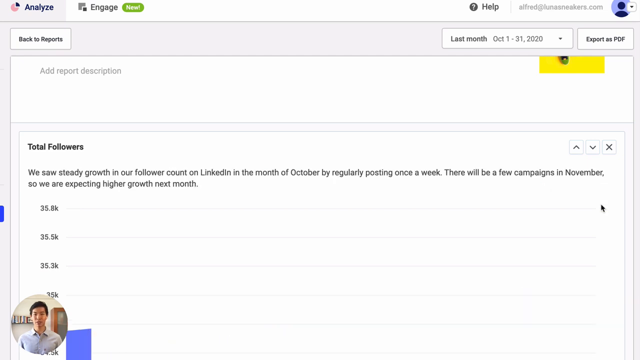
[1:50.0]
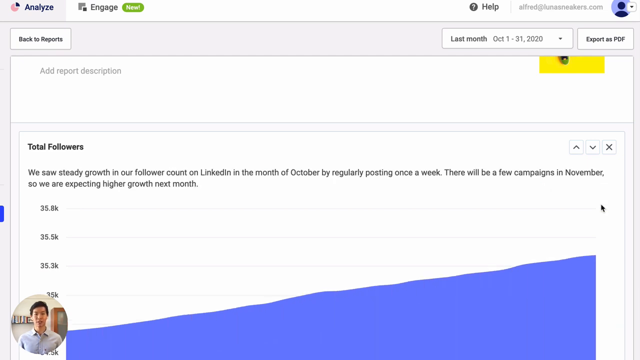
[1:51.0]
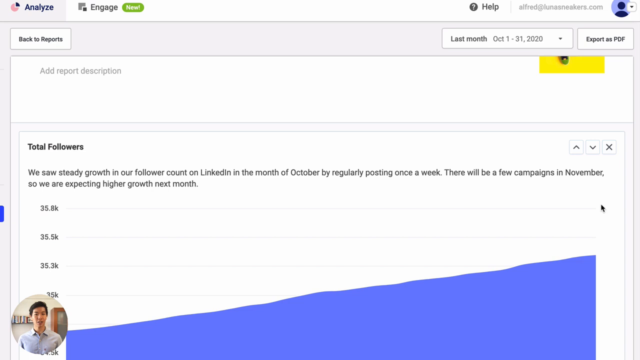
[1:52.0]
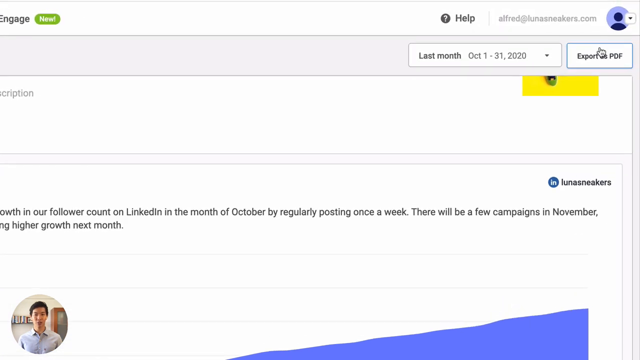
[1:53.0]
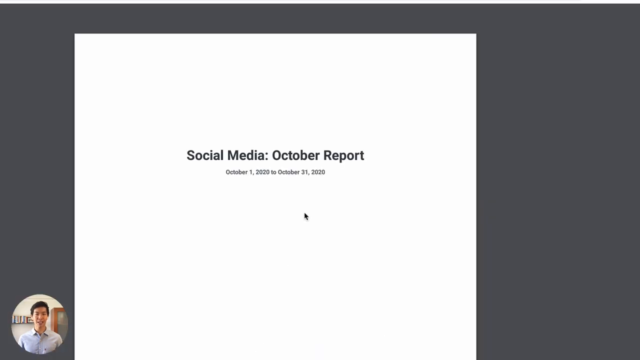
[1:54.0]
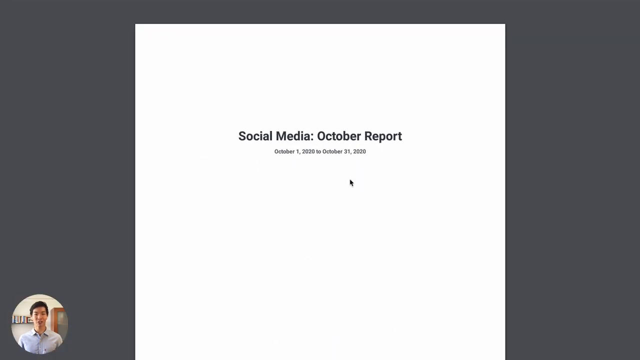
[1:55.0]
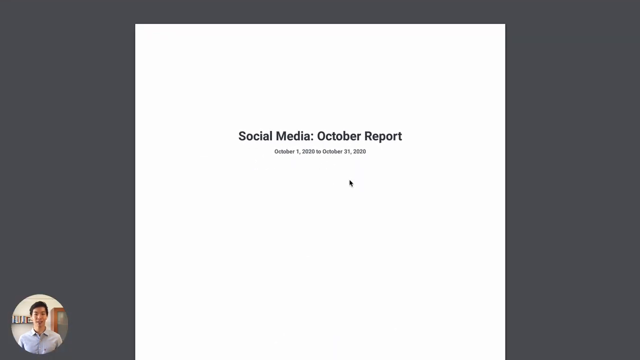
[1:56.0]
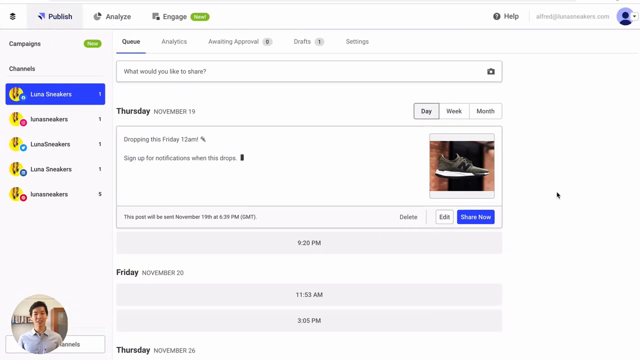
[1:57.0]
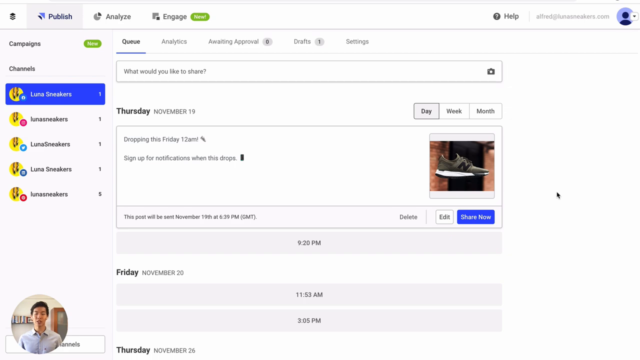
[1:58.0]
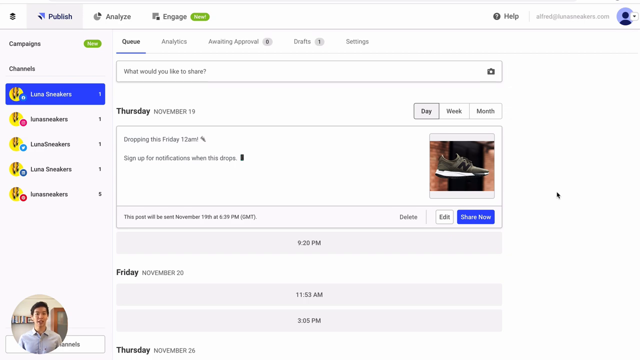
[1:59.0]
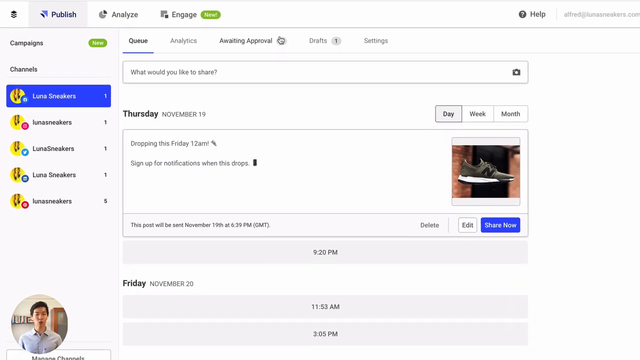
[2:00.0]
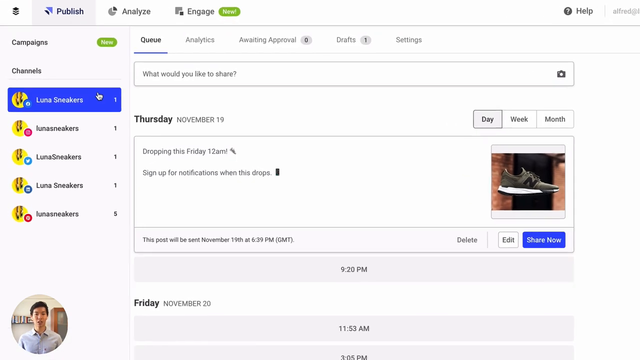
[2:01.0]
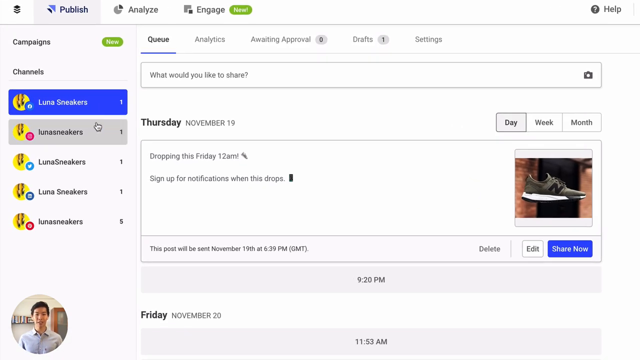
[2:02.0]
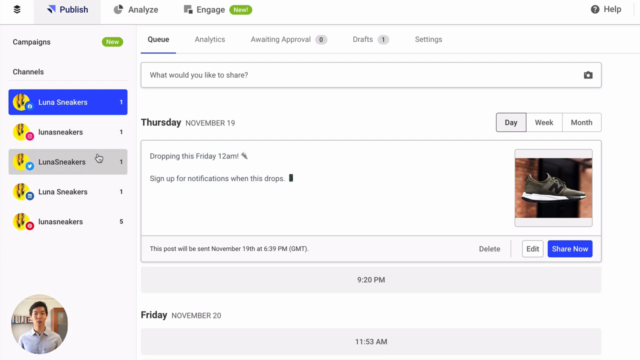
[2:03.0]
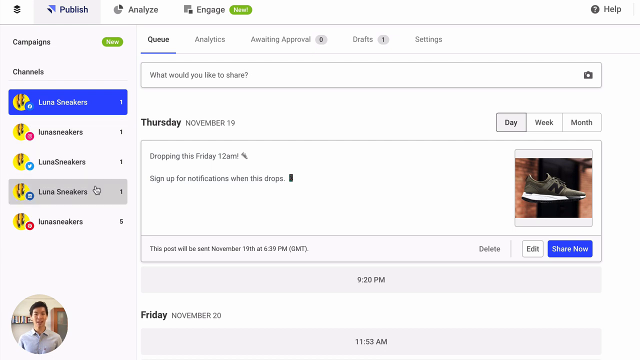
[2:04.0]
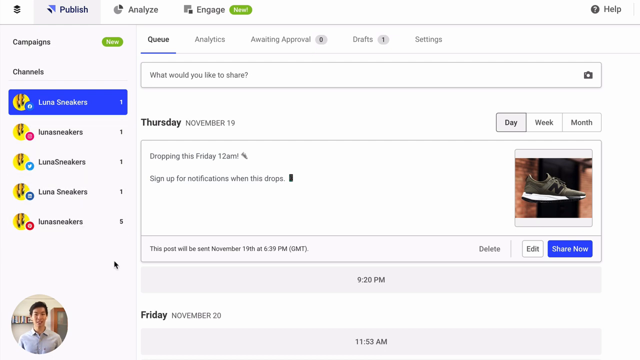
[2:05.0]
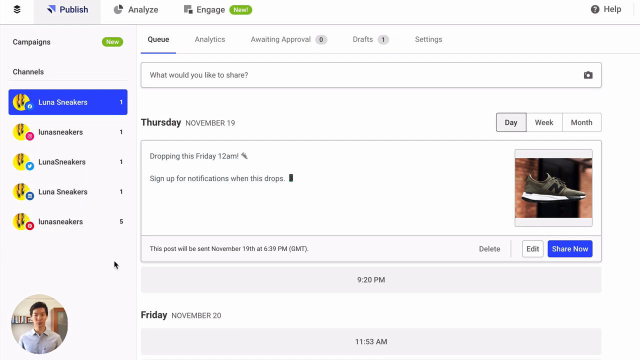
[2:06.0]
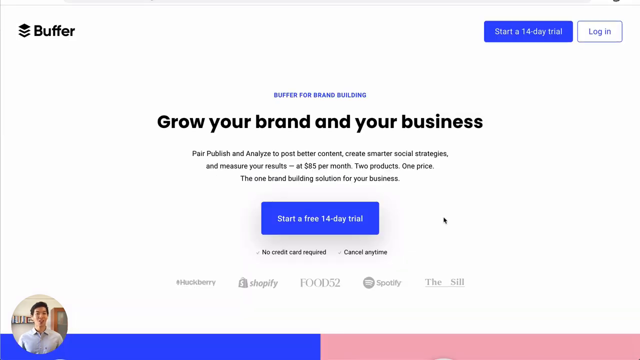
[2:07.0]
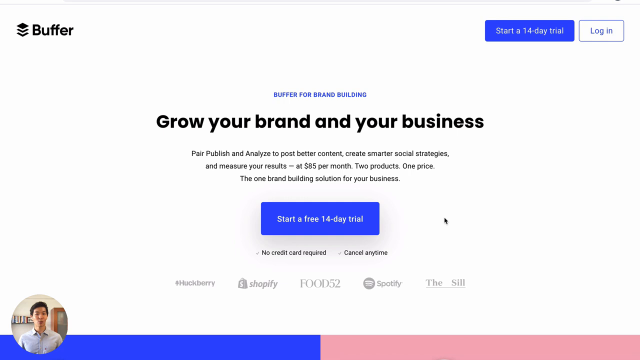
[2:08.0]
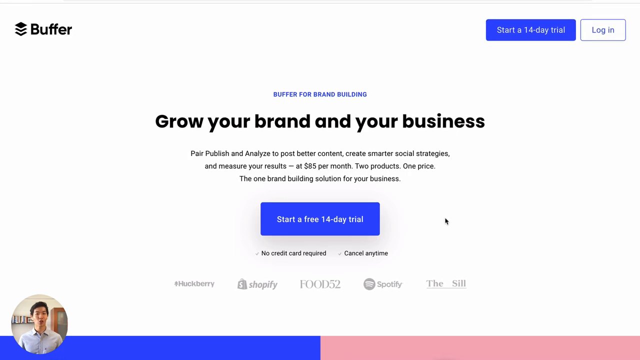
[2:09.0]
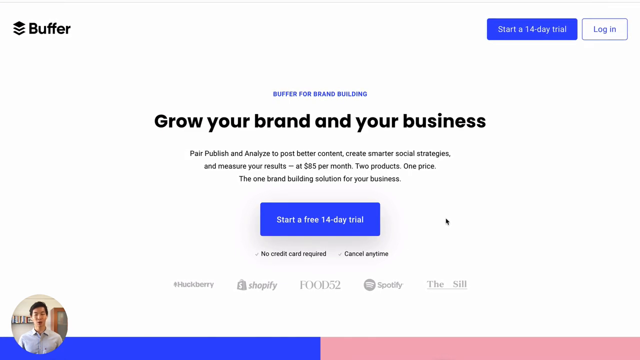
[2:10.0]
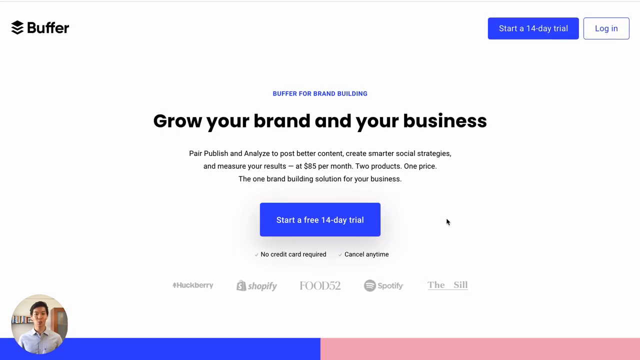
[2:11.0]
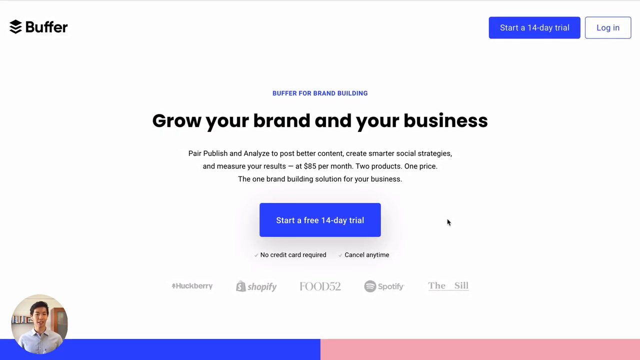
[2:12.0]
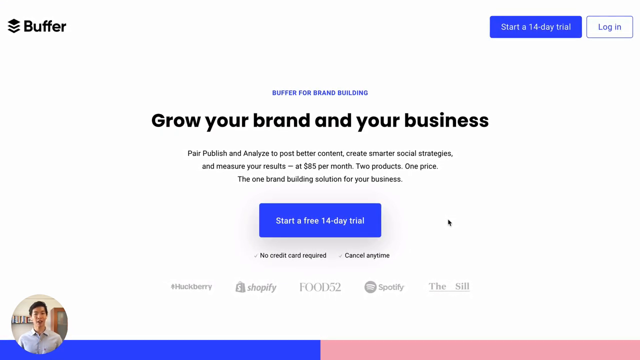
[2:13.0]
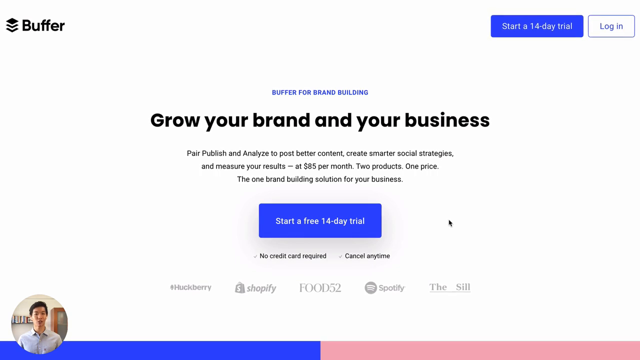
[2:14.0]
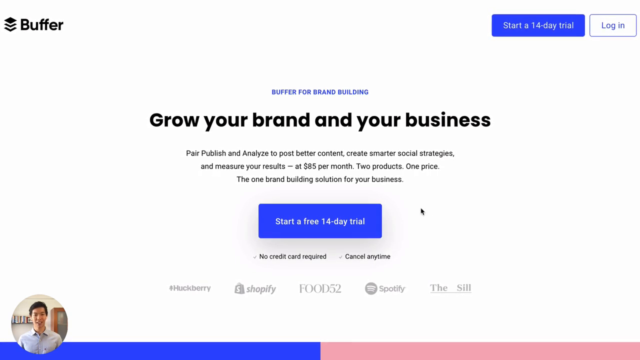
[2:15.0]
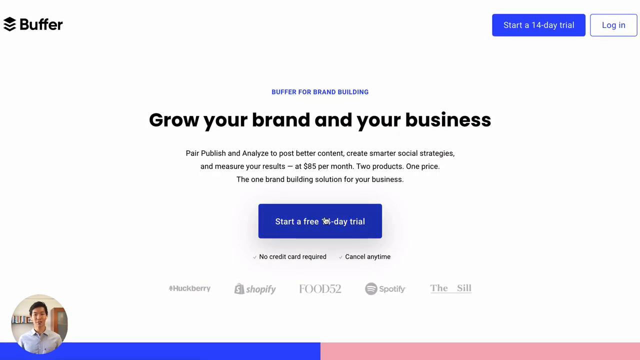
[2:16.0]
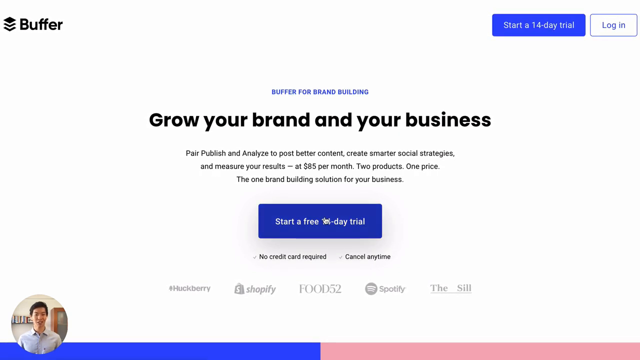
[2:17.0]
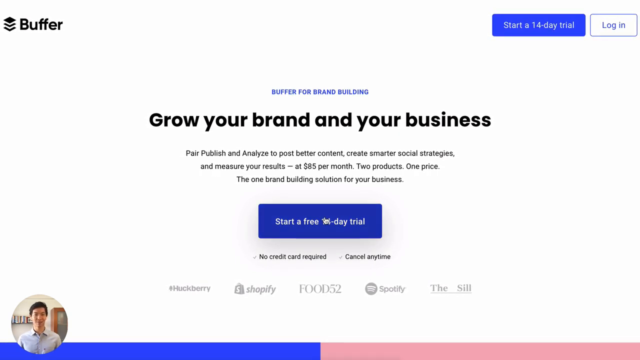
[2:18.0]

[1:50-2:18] The total followers section on Analyze is on screen, and its graph slowly reveals itself, showing a steady incline. The mouse hovers over export as a PDF and clicks it; the screen disappears, revealing a pop-up window that reads "social media October report October 1st 2020 to October 31st 2020", which the mouse kind of hovers around. The entire screen then swipes away to the right, revealing the original home screen, this time on the publish tab, showing different channels, the queue and analytics. The mouse hovers over the different channels, including "Luna sneakers", hovering over each one. Suddenly the screen changes to a Start a Free Trial page with options to start a free trial or log in, and the mouse slowly hovers over "Start a Free 14-Day Trial".